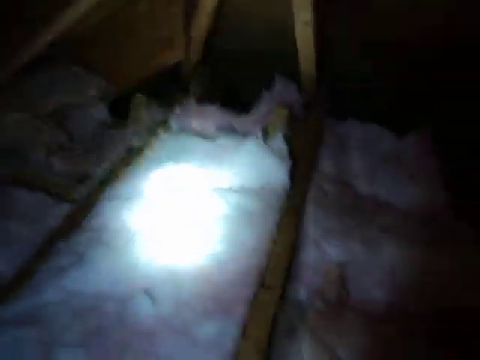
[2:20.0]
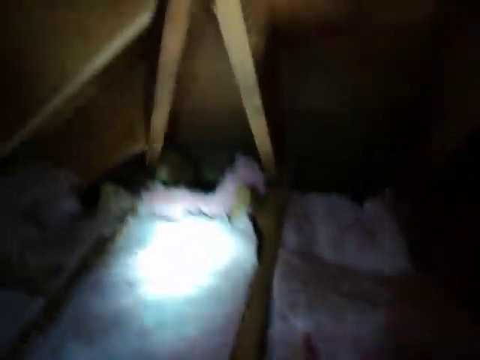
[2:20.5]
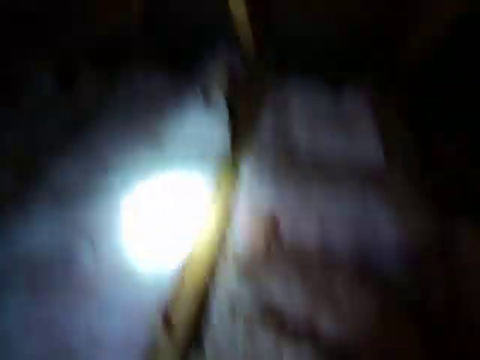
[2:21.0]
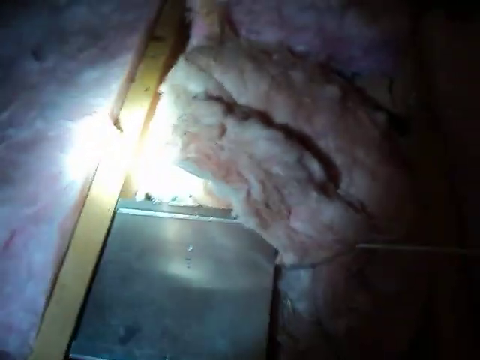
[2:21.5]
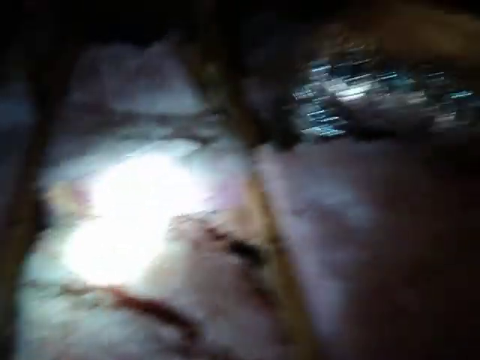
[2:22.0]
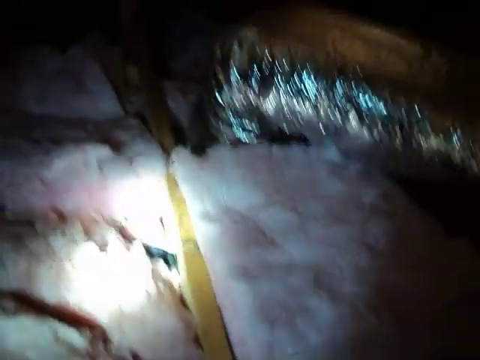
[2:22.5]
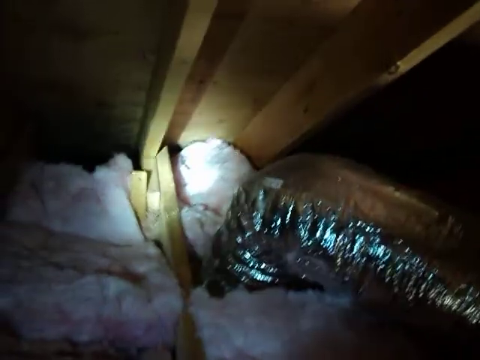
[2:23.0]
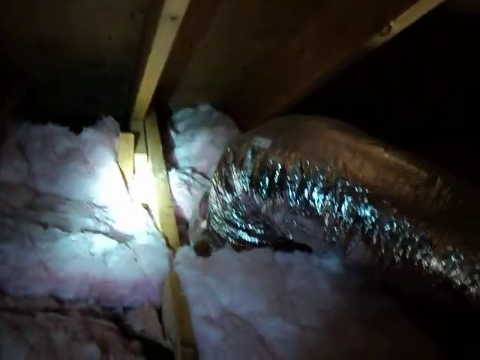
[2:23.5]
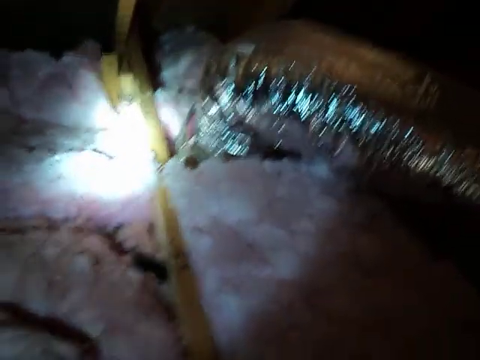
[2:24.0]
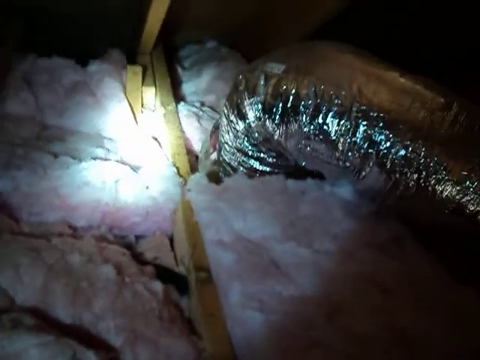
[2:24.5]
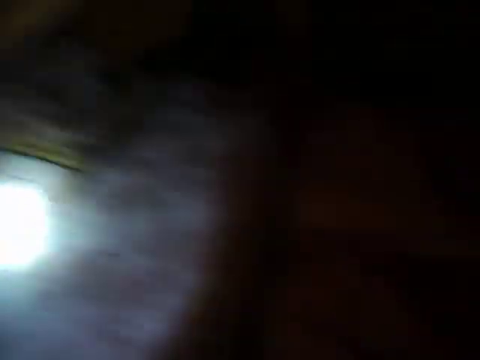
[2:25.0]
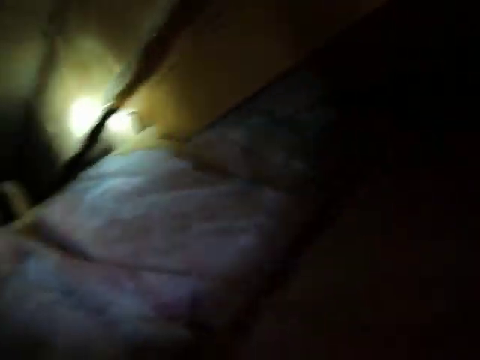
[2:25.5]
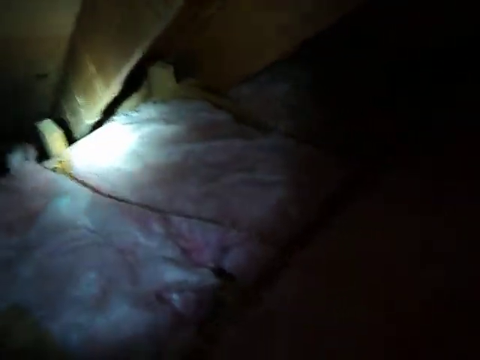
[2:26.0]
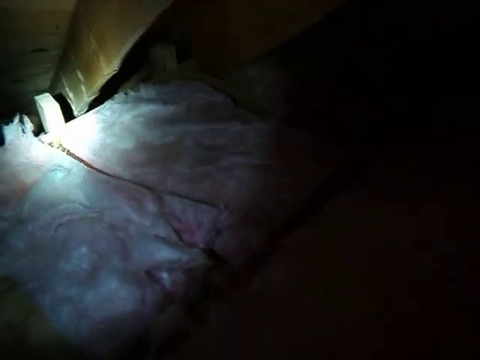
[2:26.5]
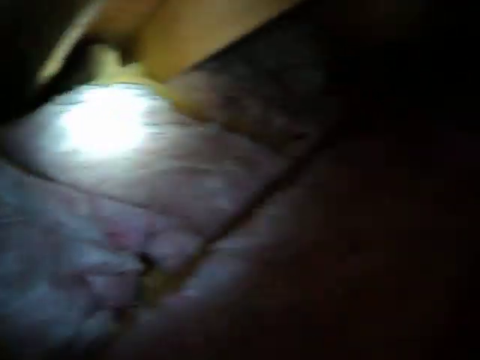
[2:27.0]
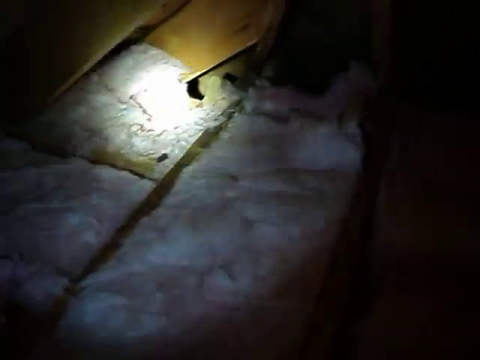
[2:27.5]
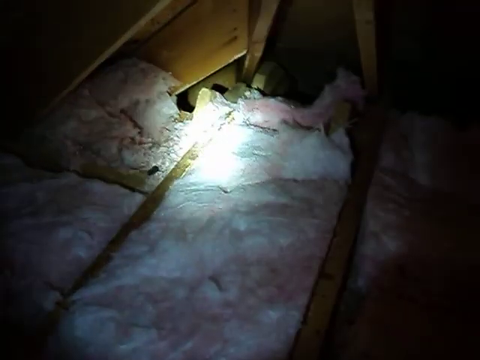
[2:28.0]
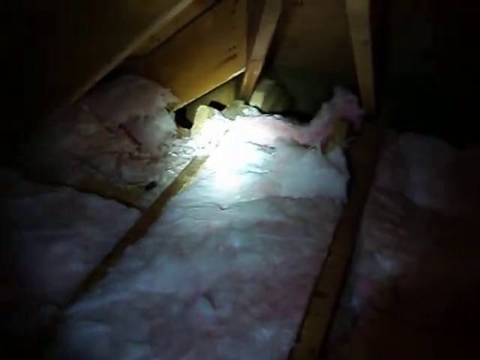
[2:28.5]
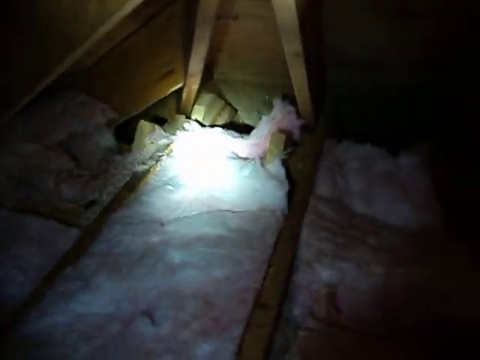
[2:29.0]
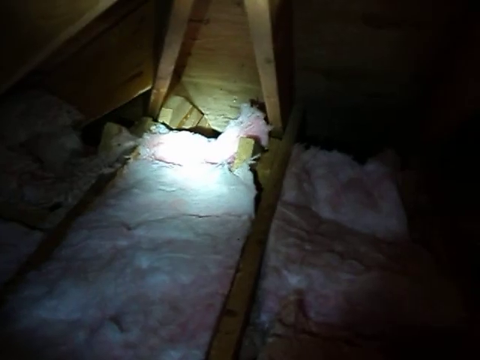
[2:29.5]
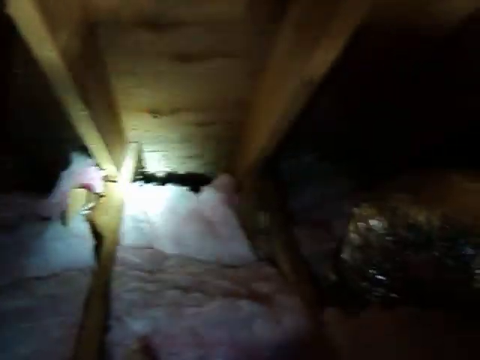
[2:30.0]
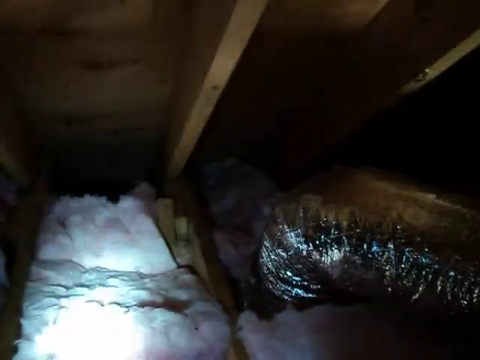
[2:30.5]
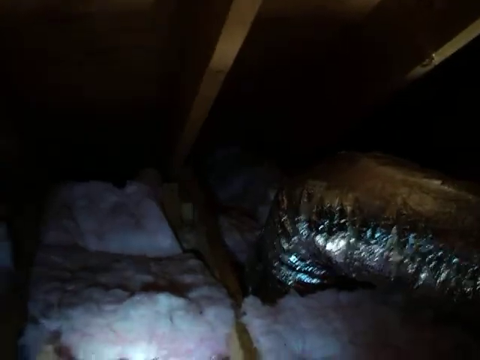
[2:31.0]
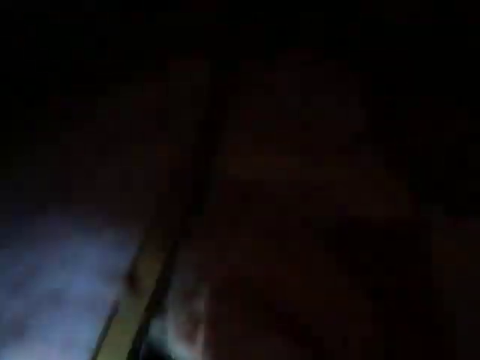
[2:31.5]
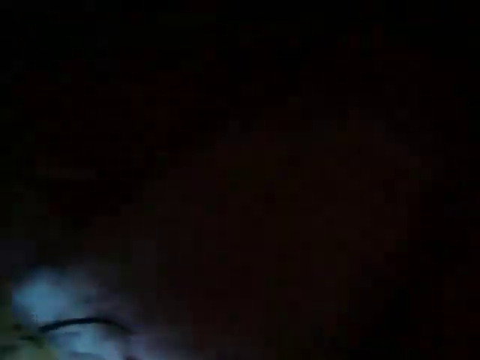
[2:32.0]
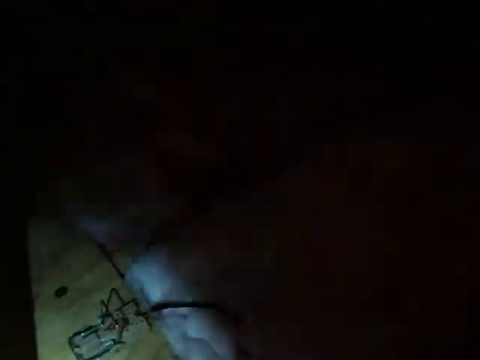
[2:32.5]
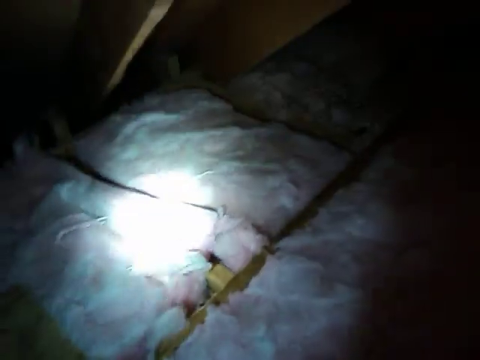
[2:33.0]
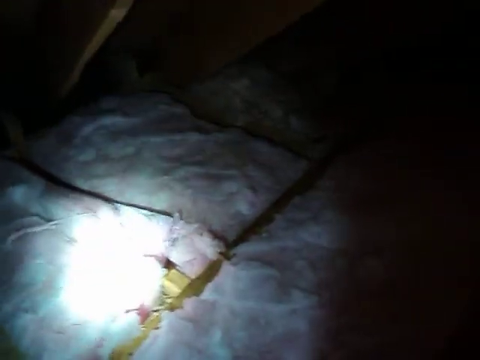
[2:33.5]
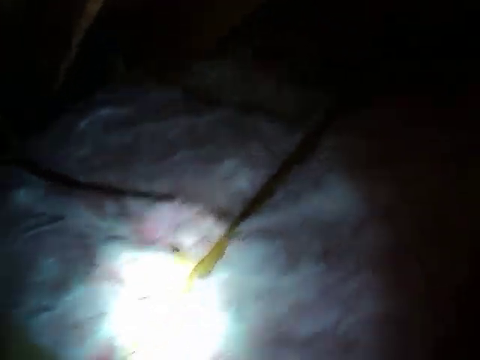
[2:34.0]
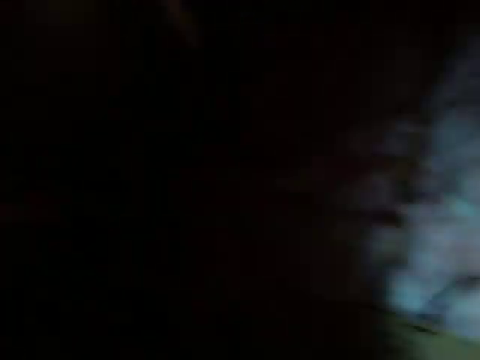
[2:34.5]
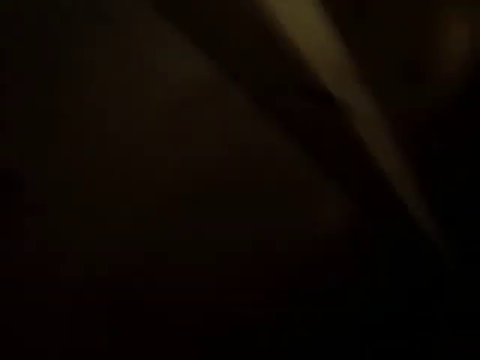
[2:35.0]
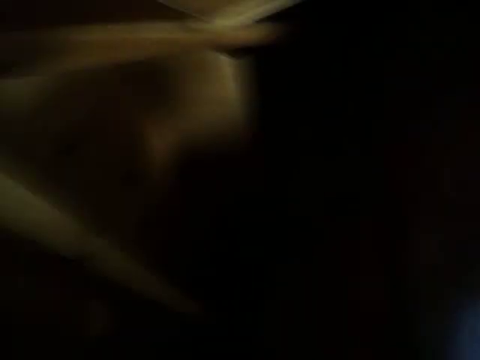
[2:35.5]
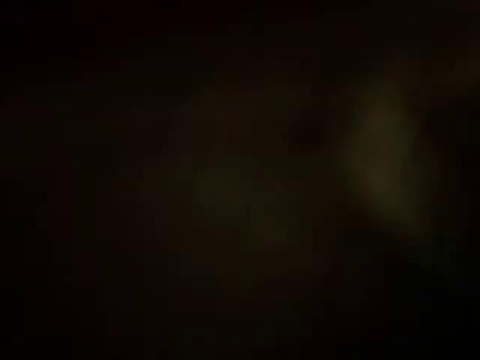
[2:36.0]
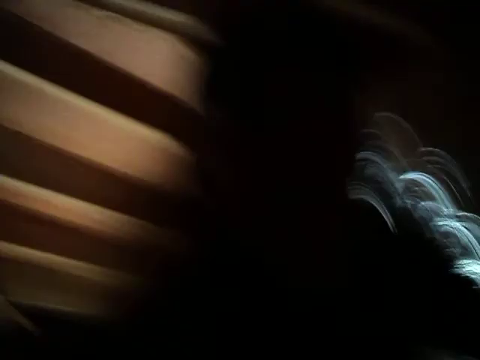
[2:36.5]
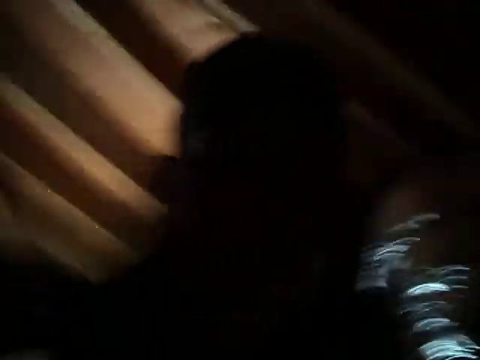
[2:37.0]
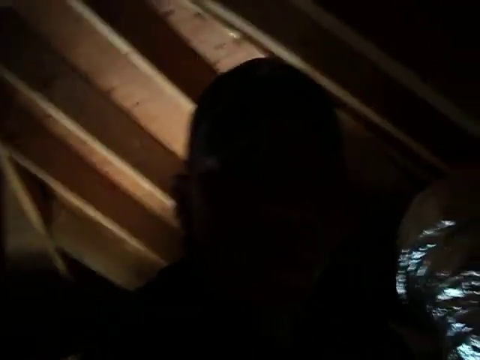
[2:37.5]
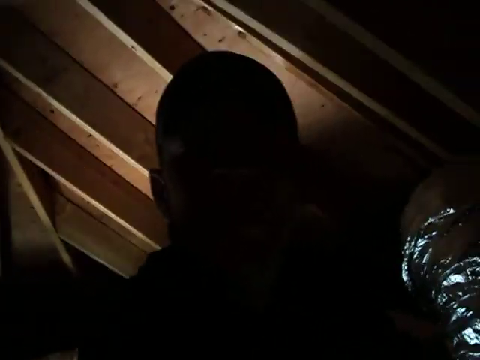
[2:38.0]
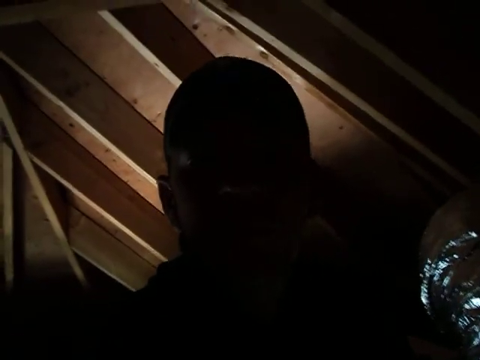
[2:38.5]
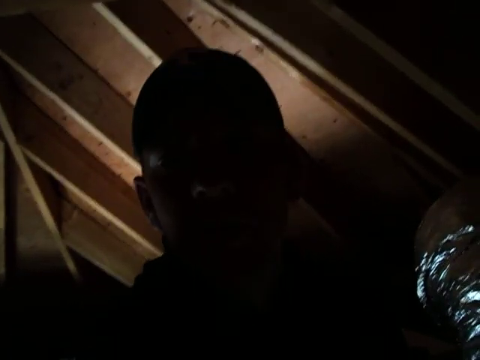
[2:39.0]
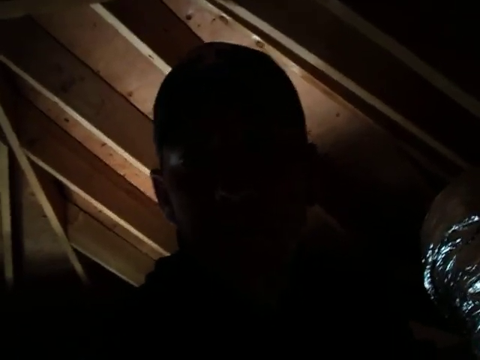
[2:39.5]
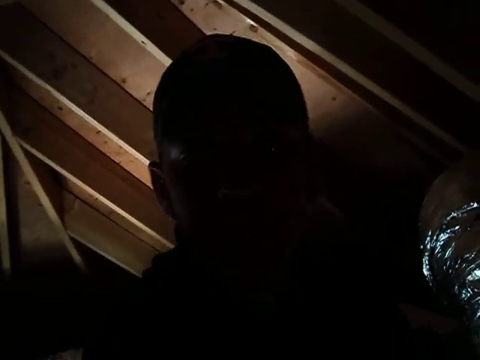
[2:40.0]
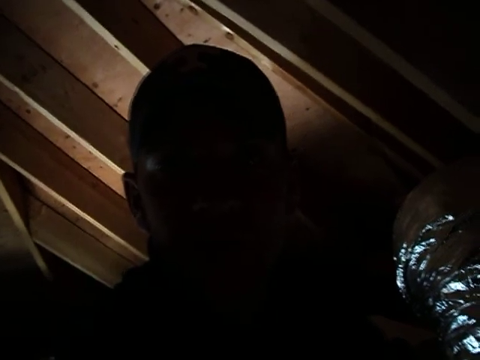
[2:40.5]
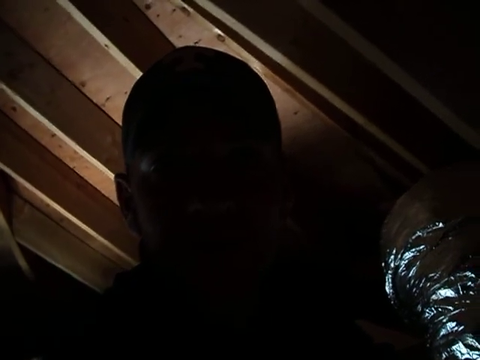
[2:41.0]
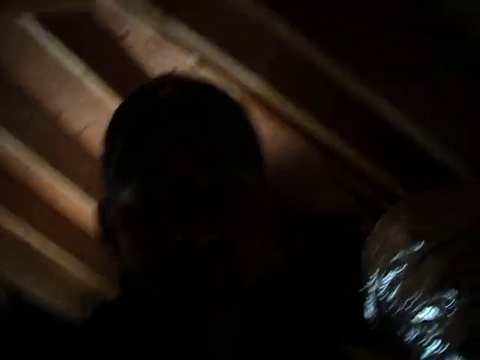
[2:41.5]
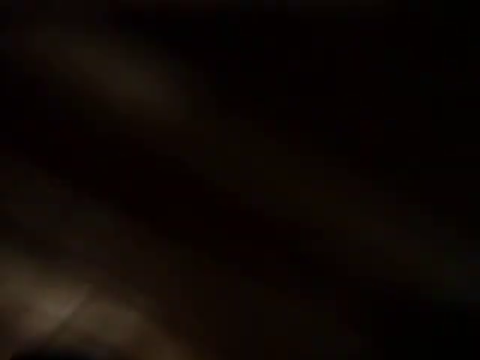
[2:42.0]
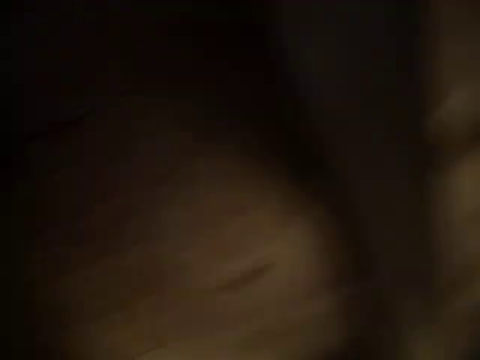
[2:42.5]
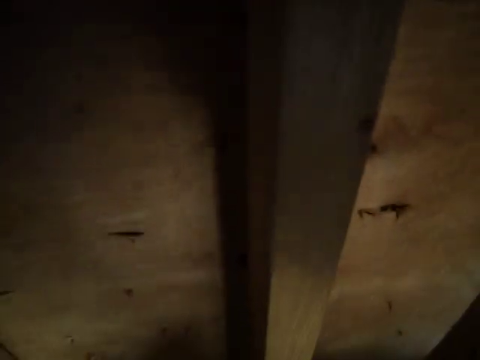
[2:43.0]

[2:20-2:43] In someone's dark attic, the person holds the camera while filming and uses a flashlight. The light shines down on the floor joists, which have pink batt insulation in between. The flashlight goes down, then somewhat comes up to the underlayment for the roof and some of the ceiling rafters. It bounces around, goes back down again, and looks to the left. The camera is very shaky. At one point the camera turns around and the man filming appears to be talking into it, but there is no light on his face, so he appears as a black blob. The camera is then turned back around, returning to shaky footage with the flashlight bouncing over the floor joists and batt insulation in a lot of erratic movement.